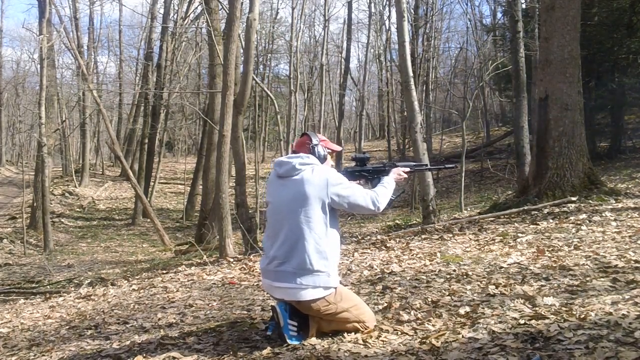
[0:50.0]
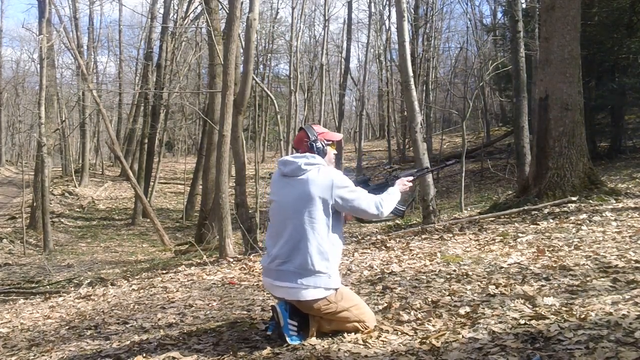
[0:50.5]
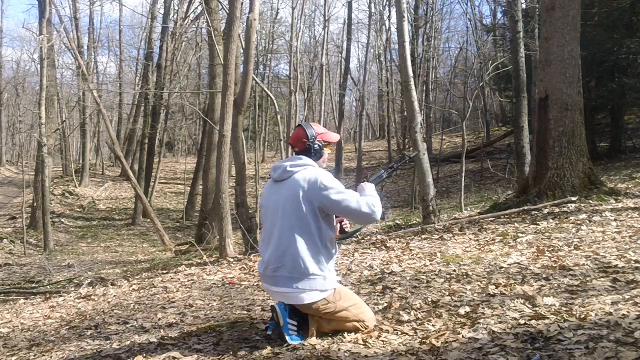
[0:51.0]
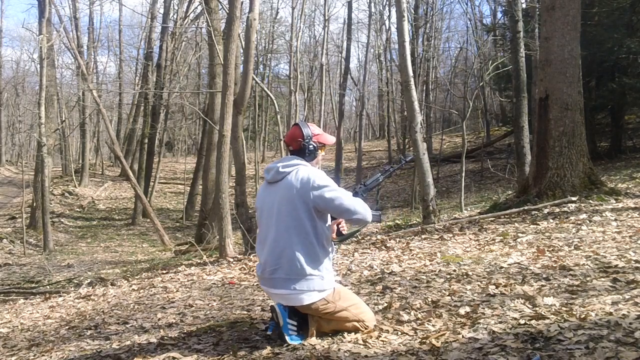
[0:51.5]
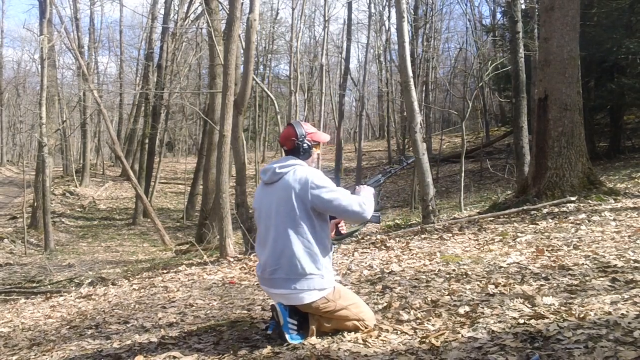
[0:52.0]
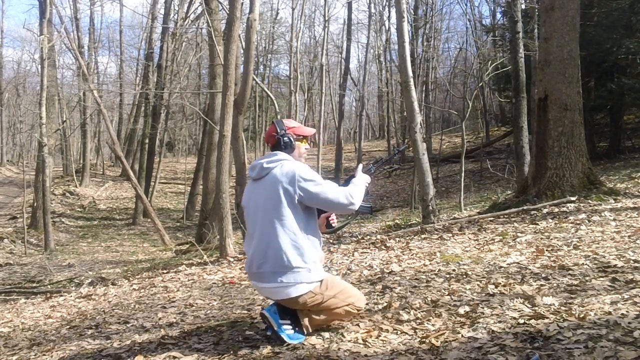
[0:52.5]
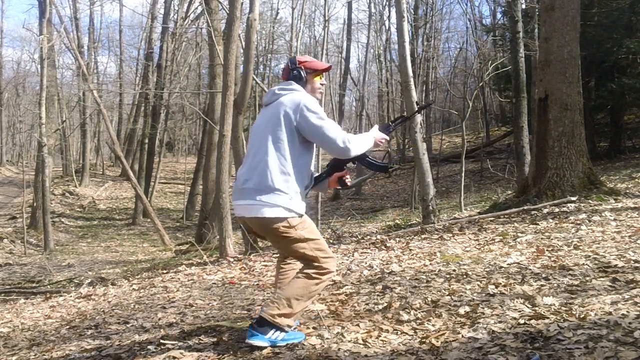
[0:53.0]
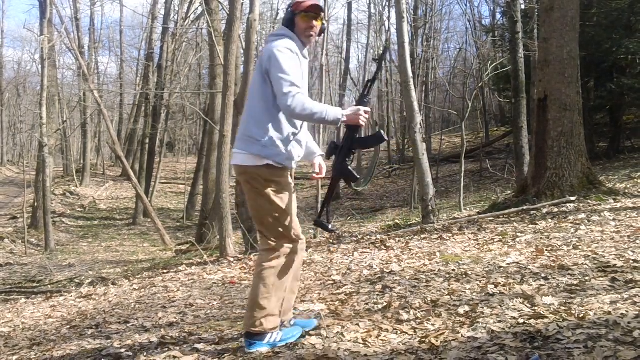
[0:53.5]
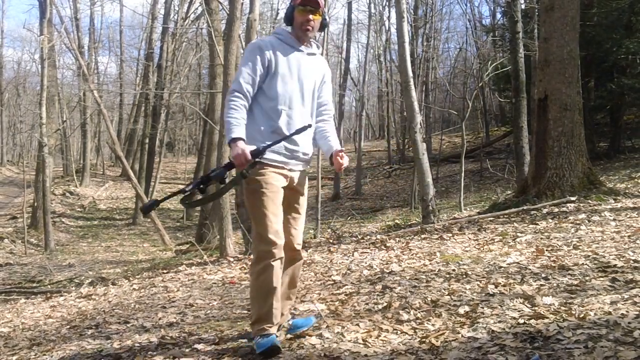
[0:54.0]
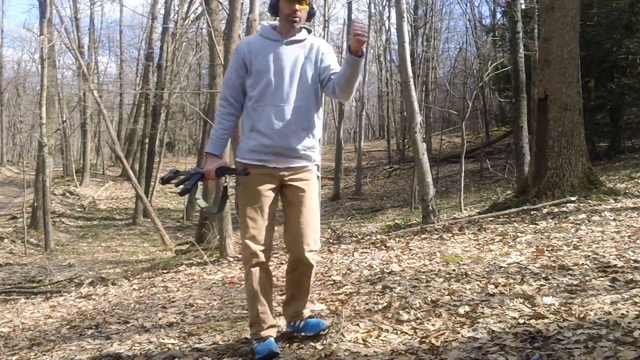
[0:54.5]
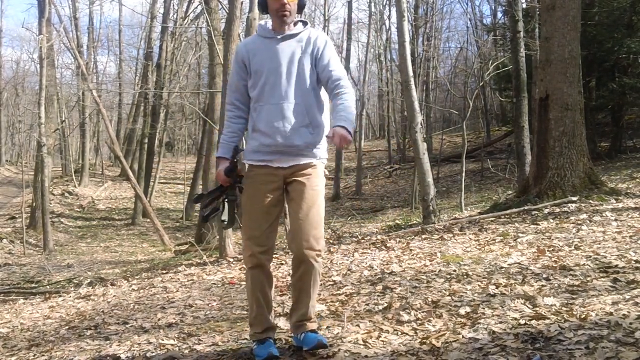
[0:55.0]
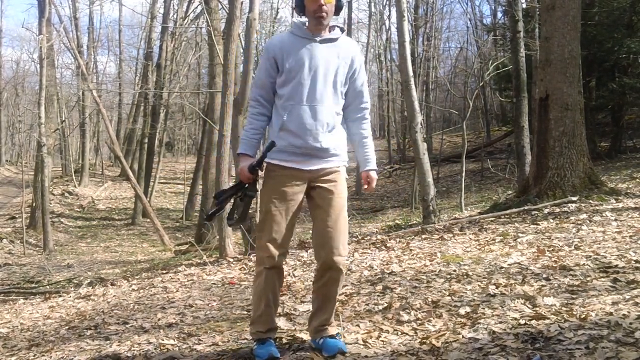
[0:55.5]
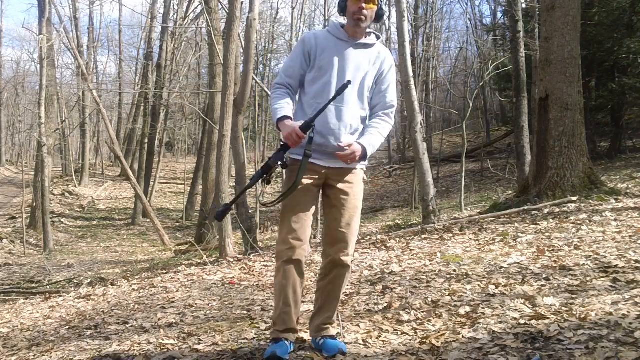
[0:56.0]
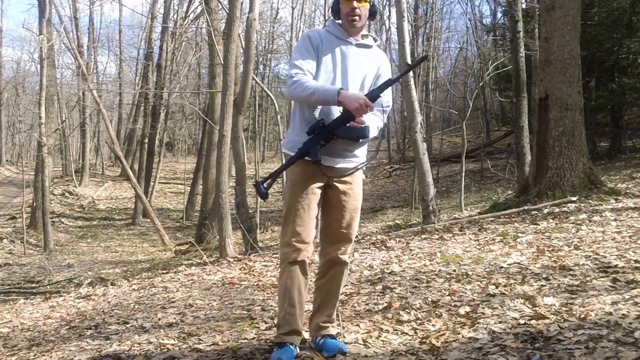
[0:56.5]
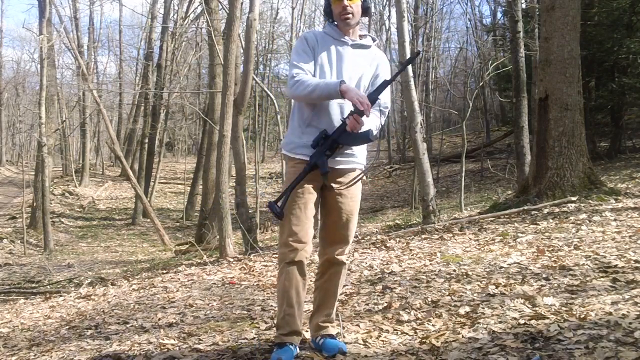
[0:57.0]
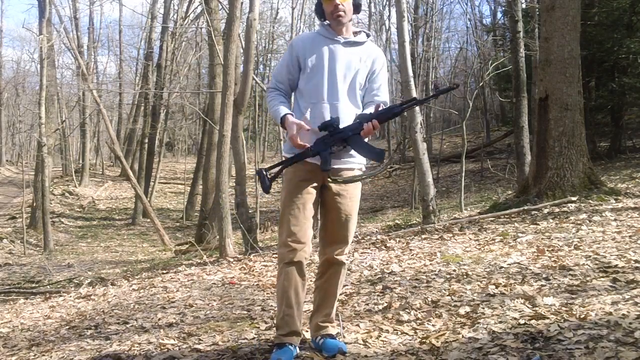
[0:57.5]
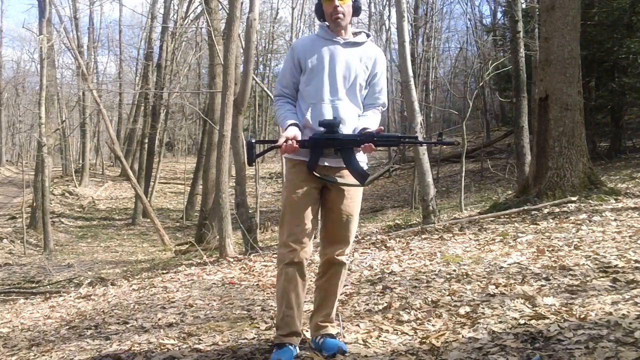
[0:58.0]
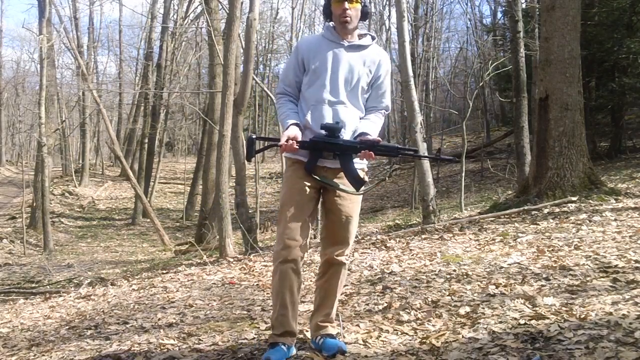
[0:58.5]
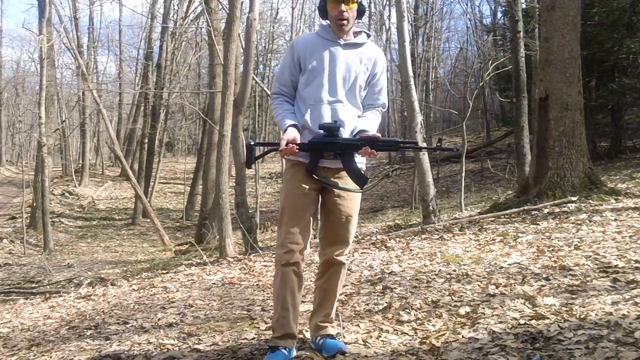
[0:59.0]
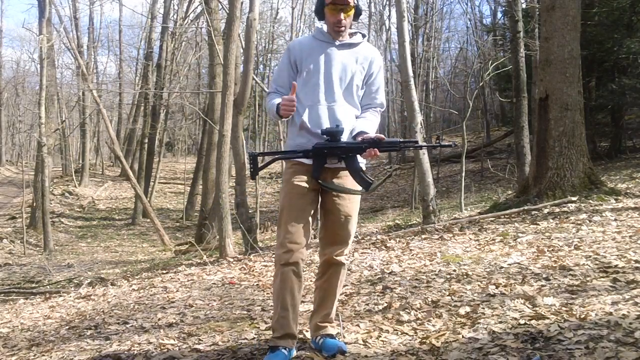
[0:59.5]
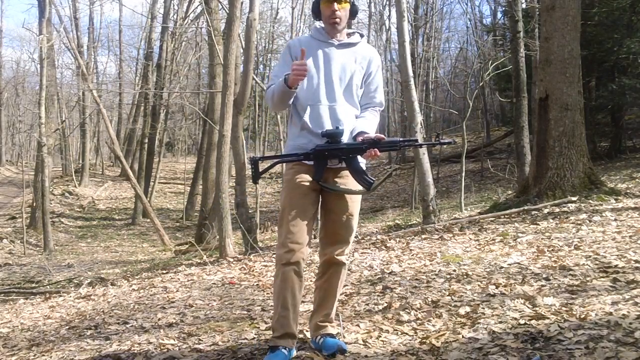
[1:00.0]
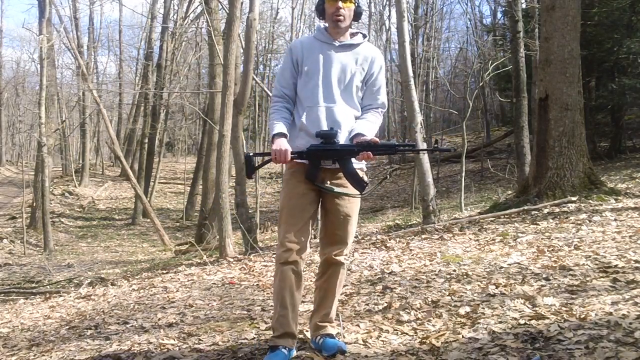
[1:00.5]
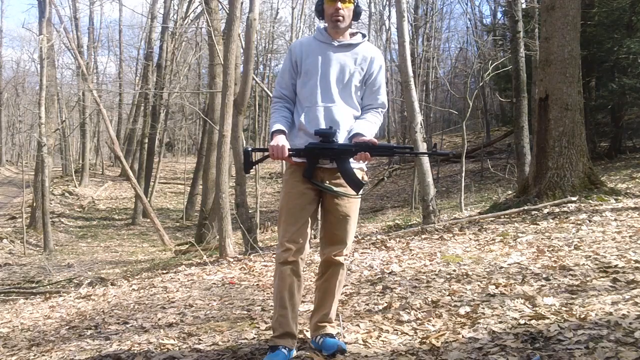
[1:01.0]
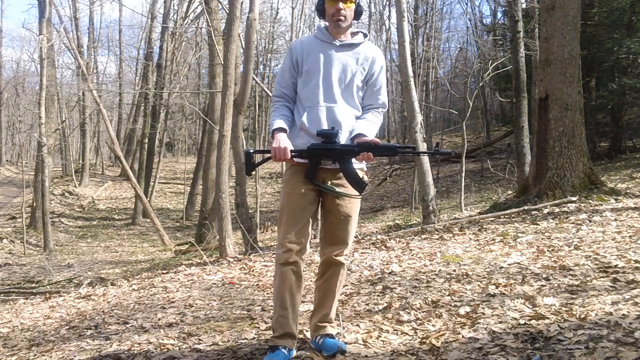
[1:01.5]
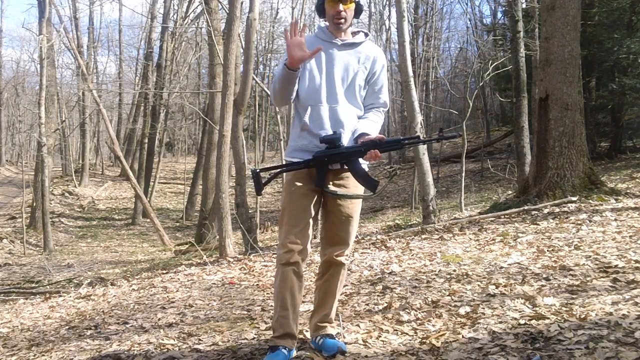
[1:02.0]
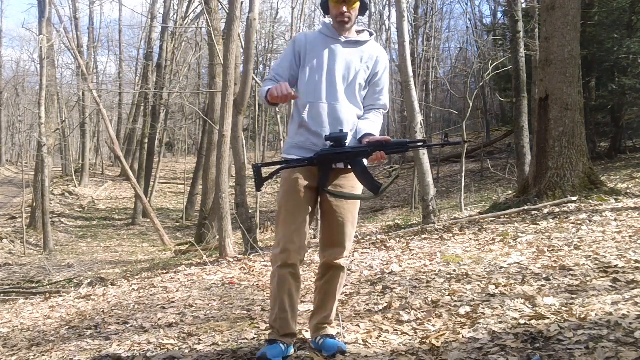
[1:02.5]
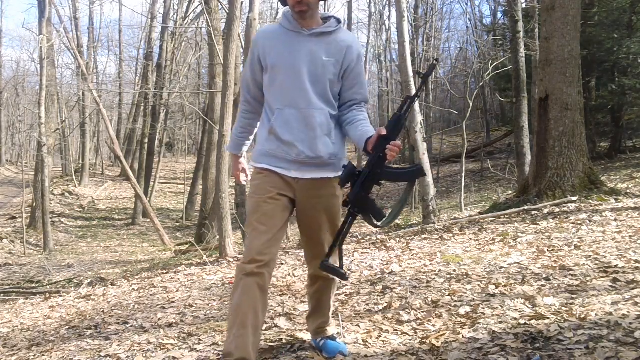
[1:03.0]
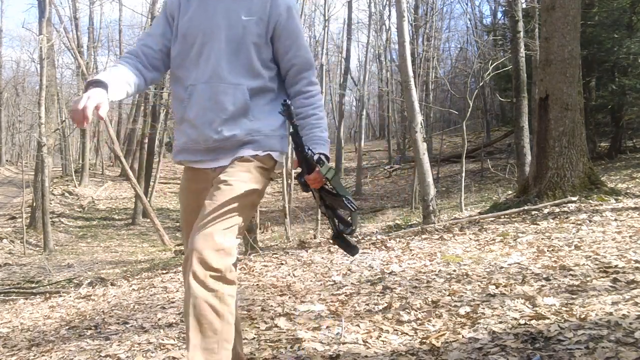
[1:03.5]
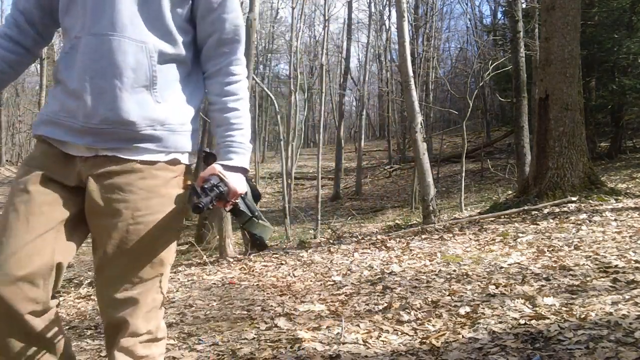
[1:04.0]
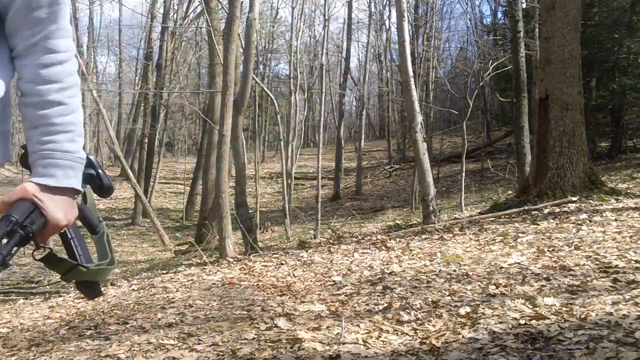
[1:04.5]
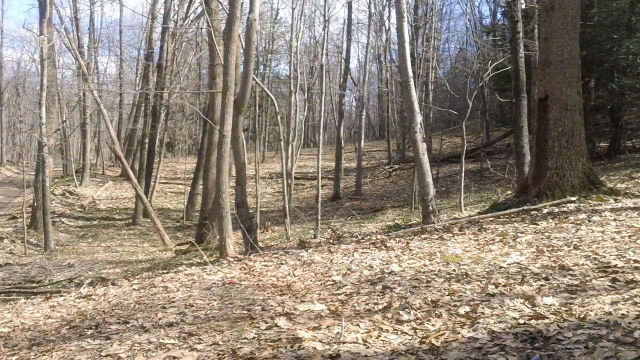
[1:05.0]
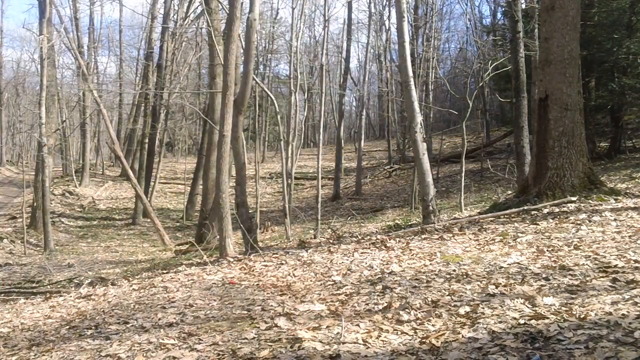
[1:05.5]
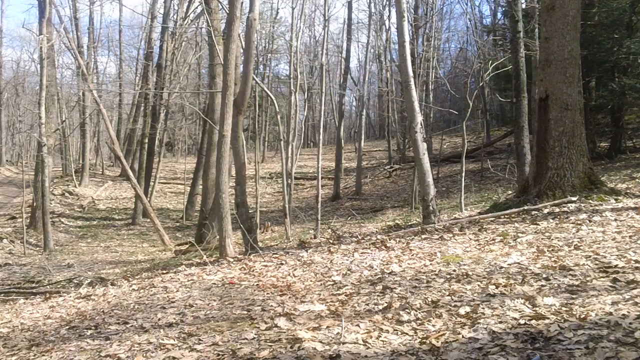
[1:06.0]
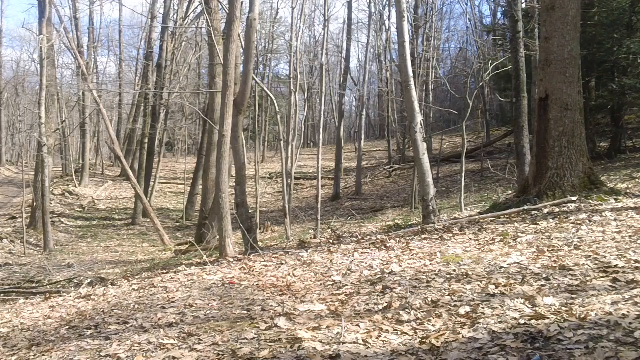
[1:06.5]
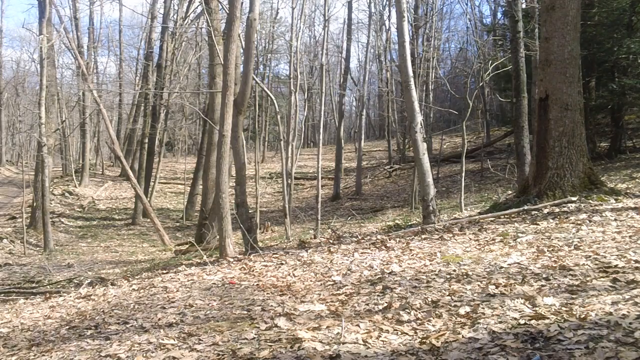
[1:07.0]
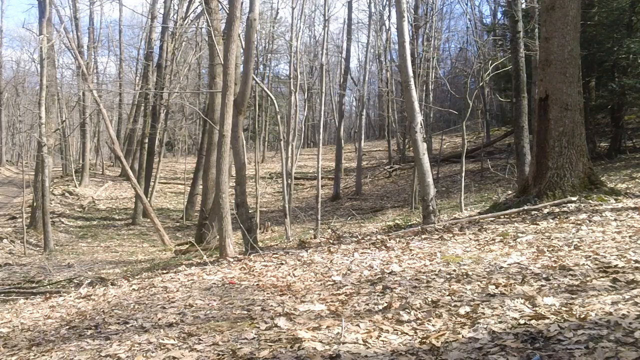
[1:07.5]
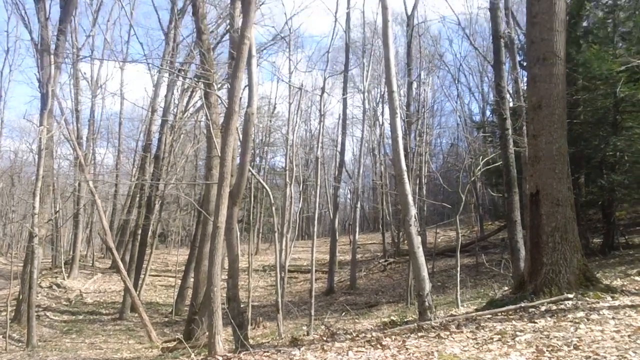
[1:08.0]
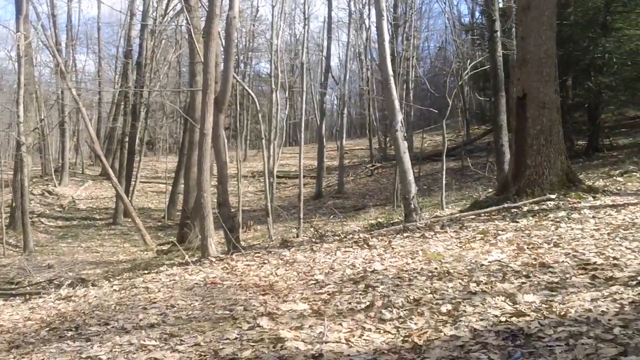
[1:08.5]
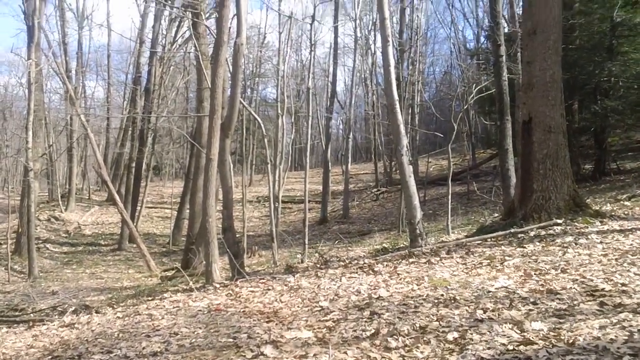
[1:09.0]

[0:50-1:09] The man, still wearing khaki jeans, a grey sweater and a red cap, is alone with woods behind him. He kneels down; his blue sneakers have grey-white stripes on them. He carries the long gun, looking through it and balancing it with his right hand. Facing away from the camera, he takes his shot. Afterwards he puts the gun on safe mode, quickly stands up, holds the gun in his right hand, signals to the camera and stands facing it while he continues talking.